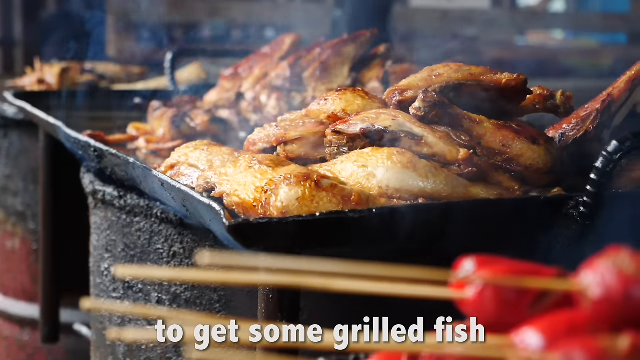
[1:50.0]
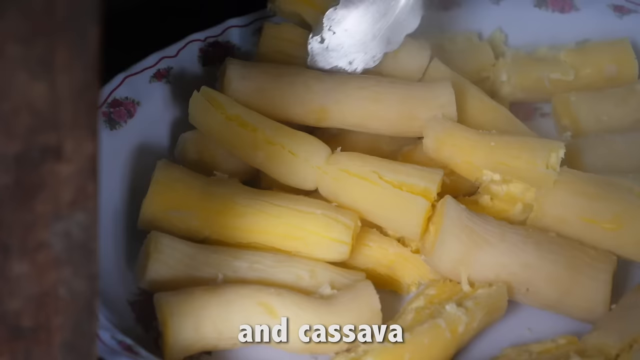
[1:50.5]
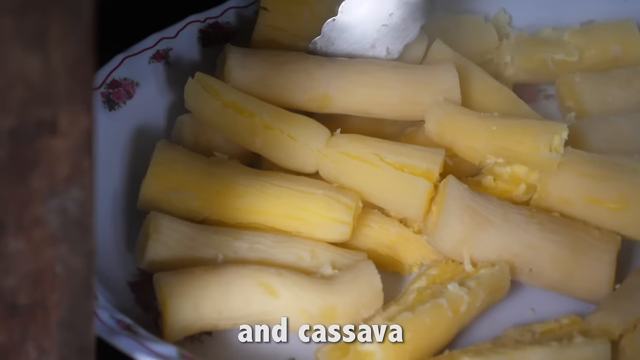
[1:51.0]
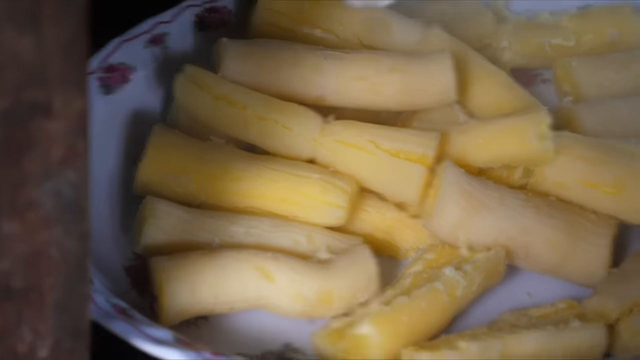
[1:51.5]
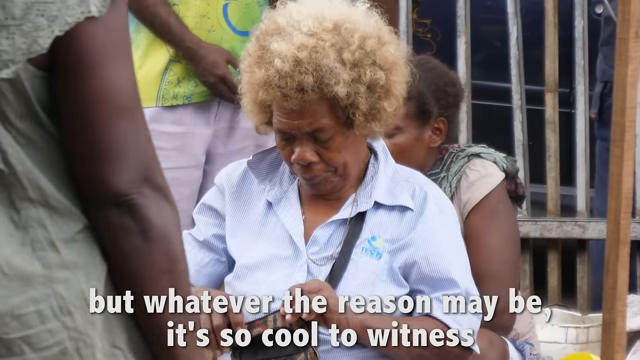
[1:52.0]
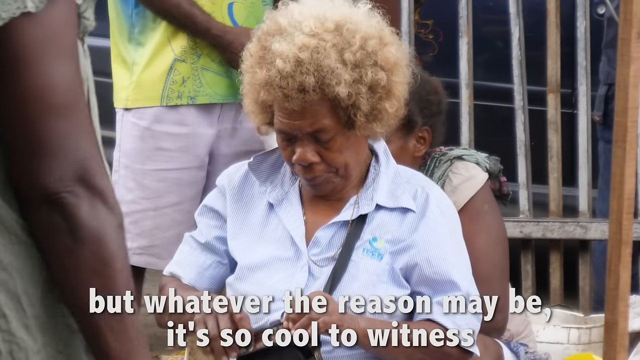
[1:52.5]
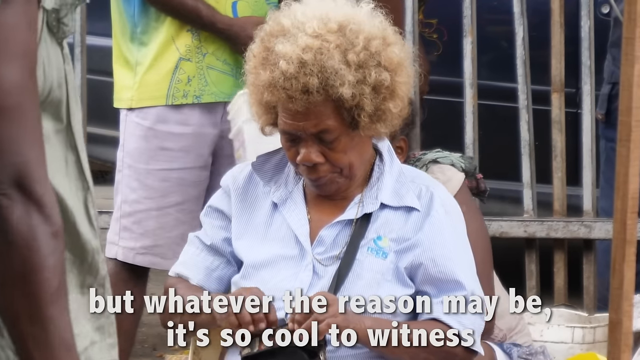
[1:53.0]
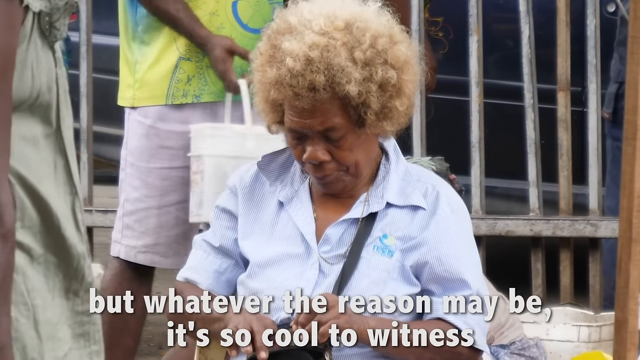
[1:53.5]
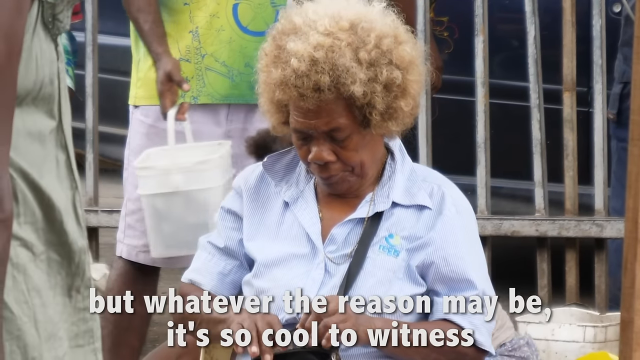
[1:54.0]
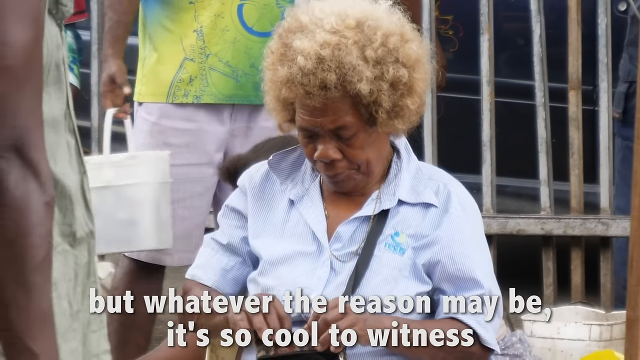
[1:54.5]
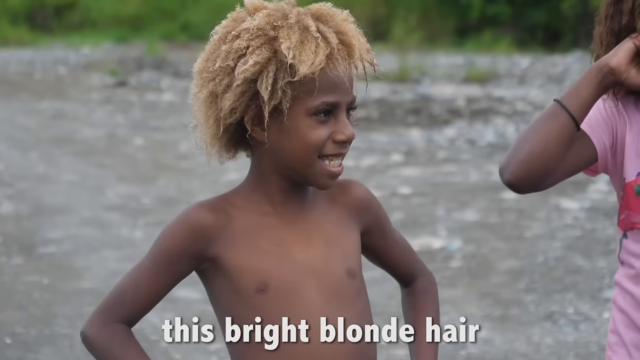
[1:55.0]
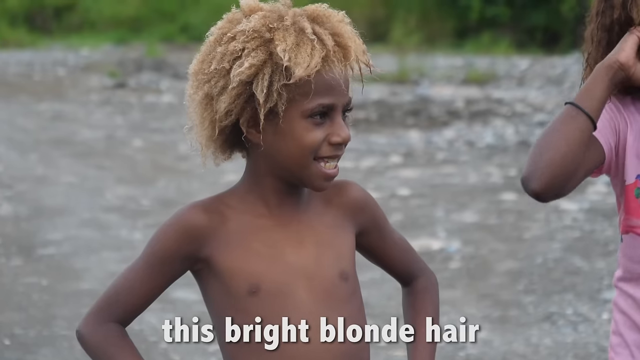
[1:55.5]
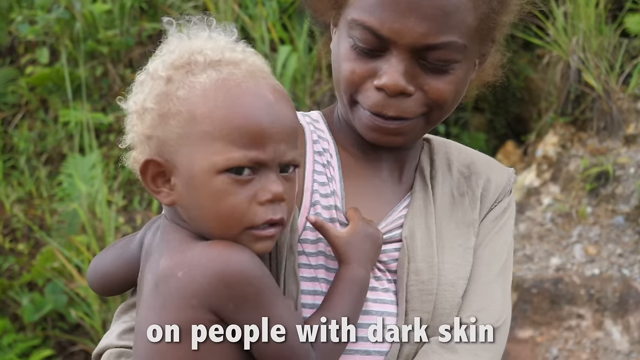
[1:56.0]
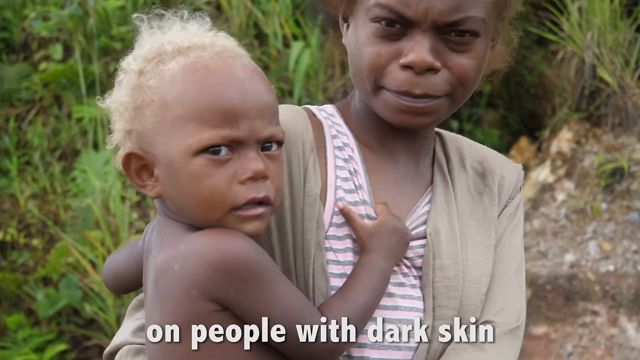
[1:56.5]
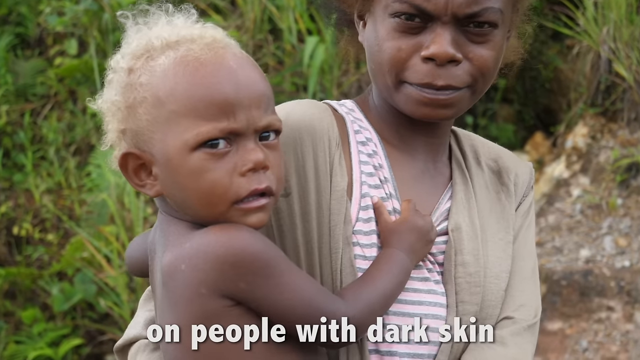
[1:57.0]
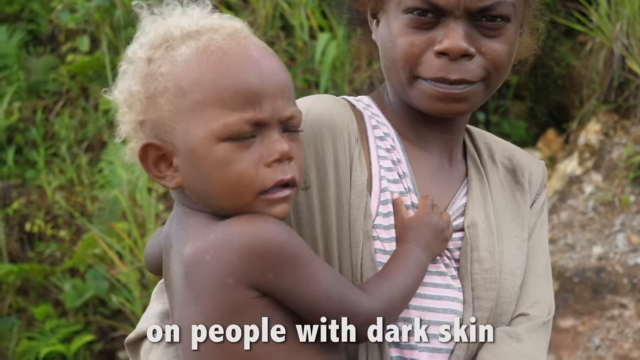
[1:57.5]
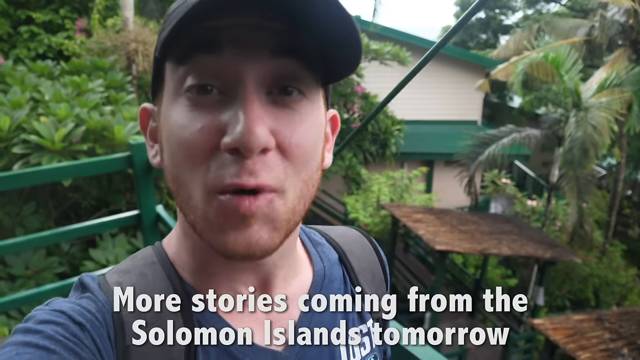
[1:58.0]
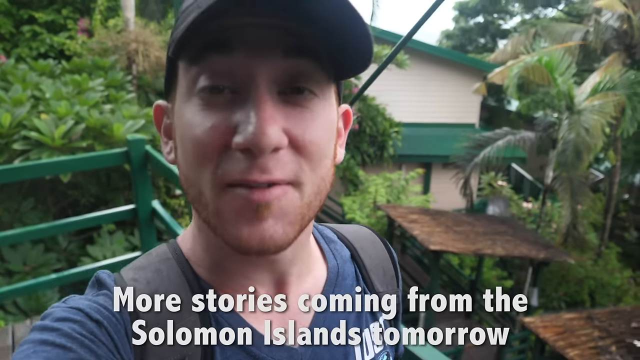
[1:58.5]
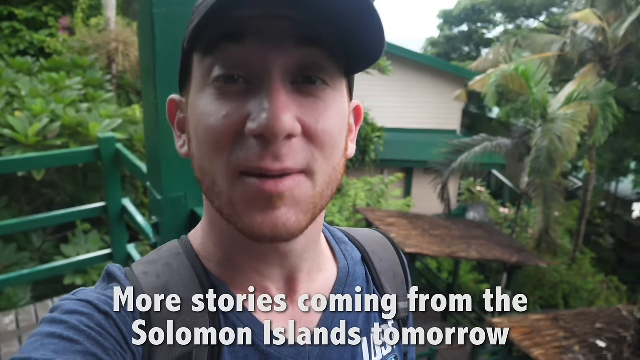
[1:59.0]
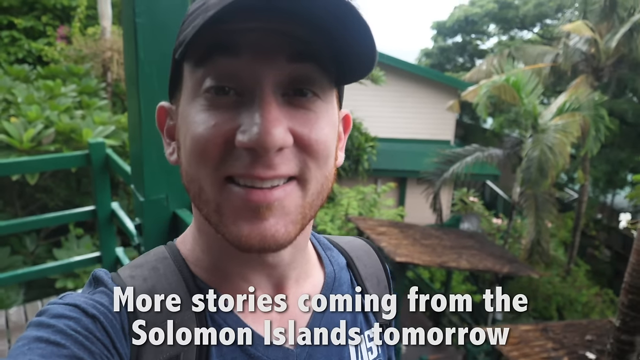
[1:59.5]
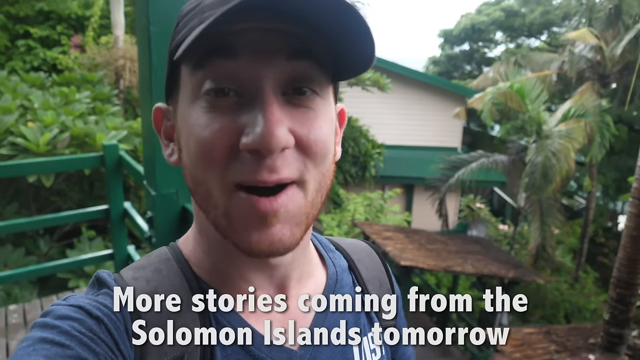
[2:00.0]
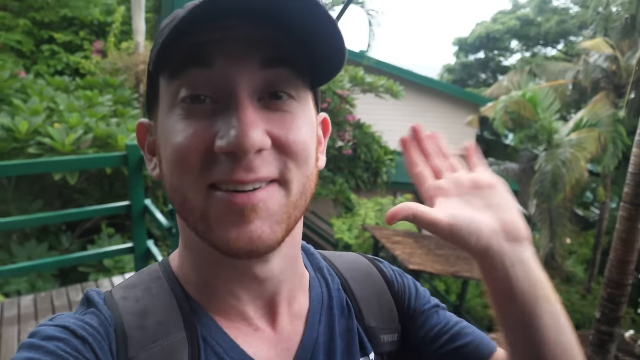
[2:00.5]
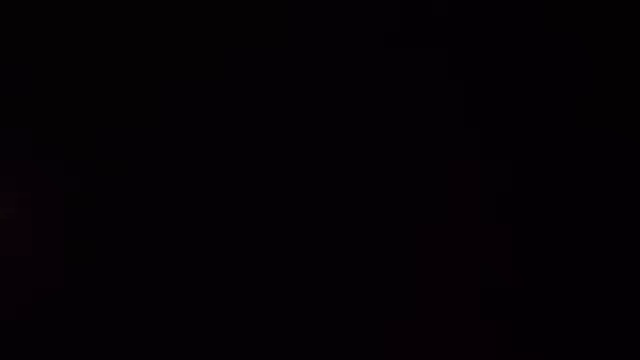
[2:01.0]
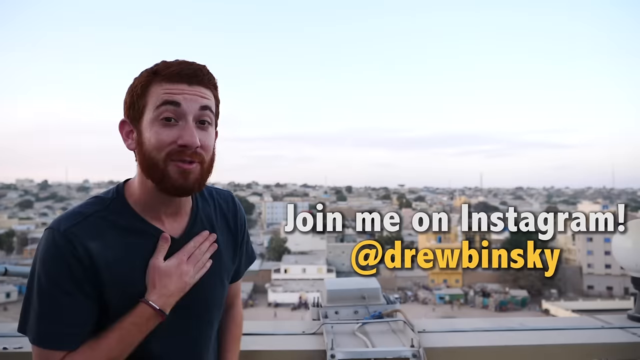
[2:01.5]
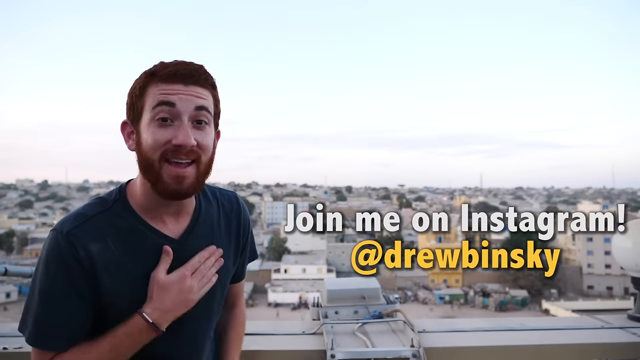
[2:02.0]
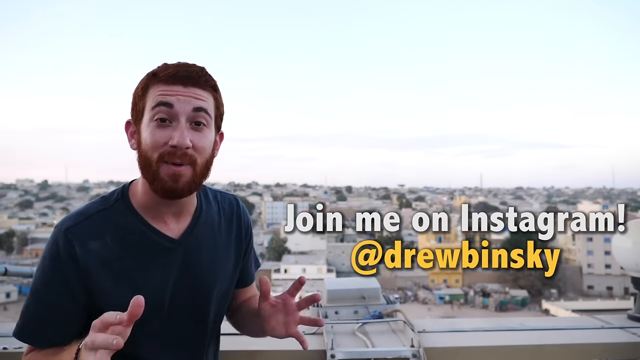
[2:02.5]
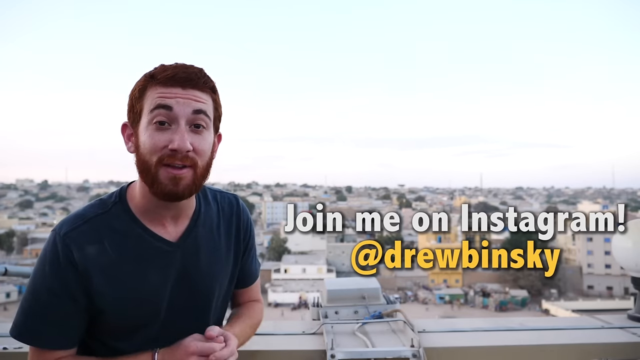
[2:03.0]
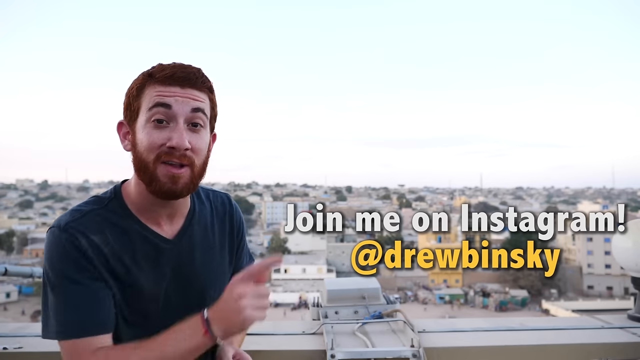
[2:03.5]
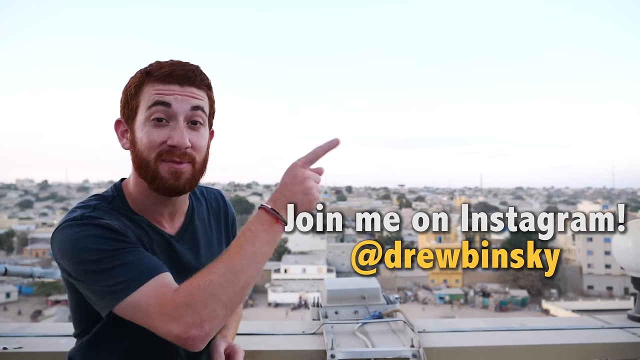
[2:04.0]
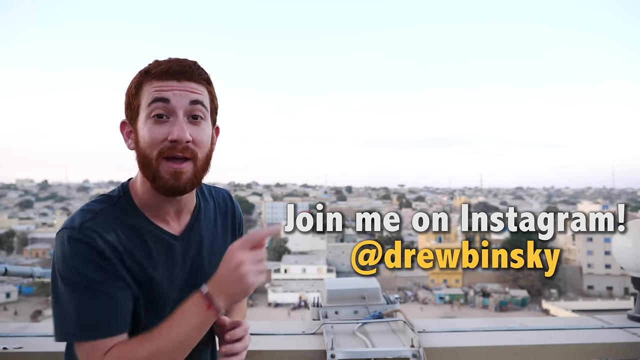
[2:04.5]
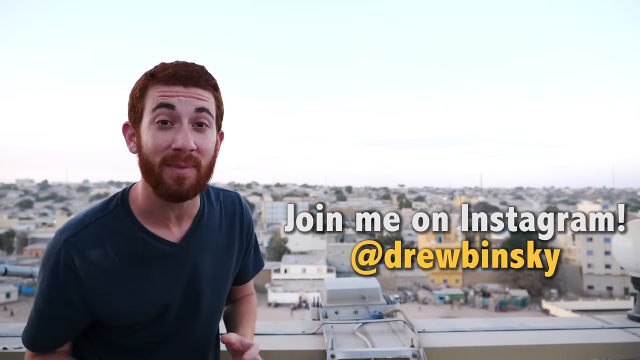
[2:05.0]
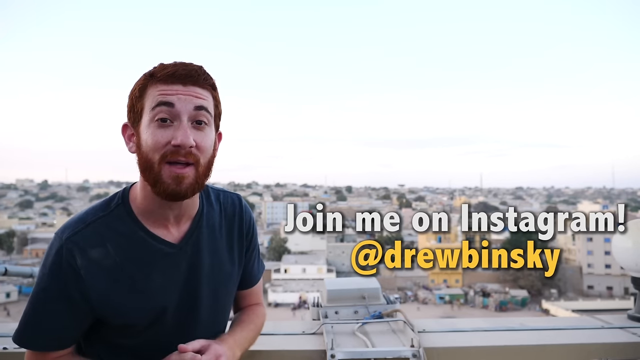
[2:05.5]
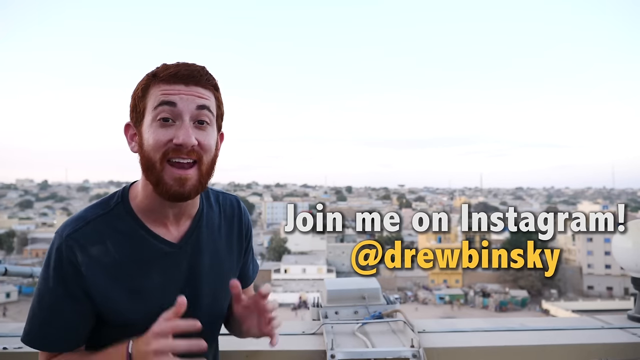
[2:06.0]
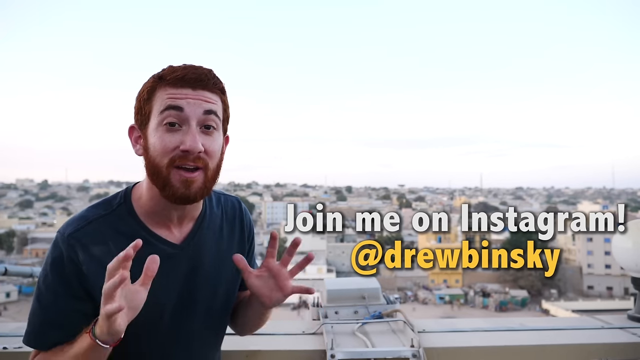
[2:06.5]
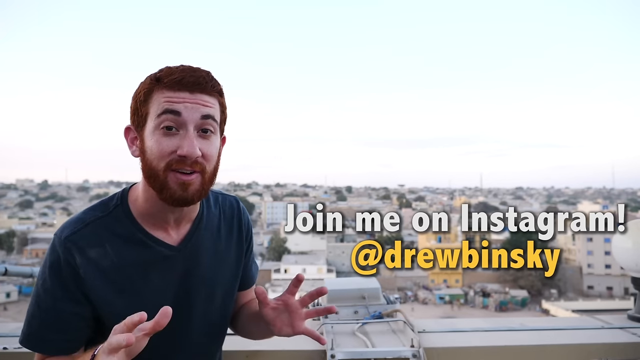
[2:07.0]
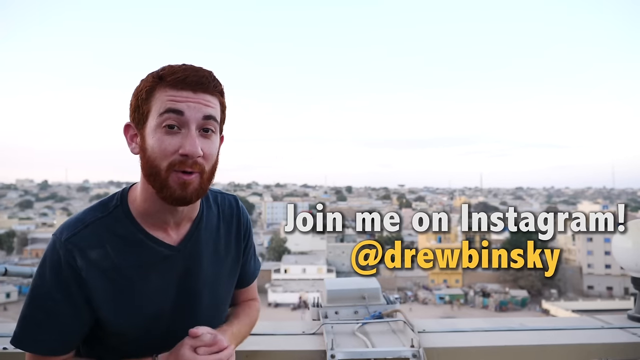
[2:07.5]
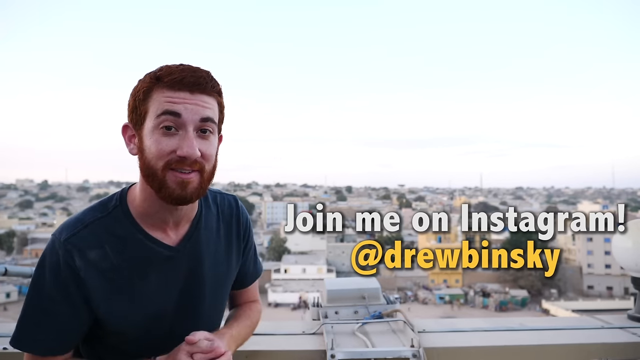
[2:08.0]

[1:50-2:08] Food is shown briefly, and the blonde hair appears once more. At the end, the man gives something like a high five toward the camera.